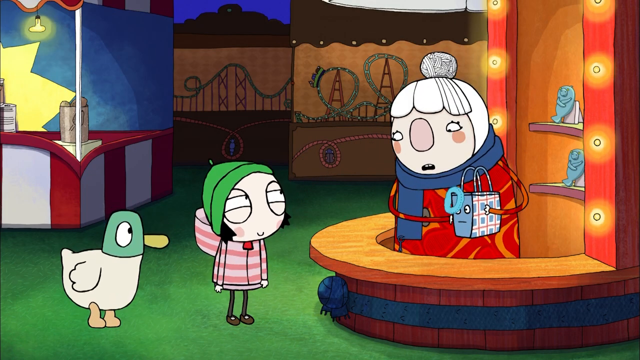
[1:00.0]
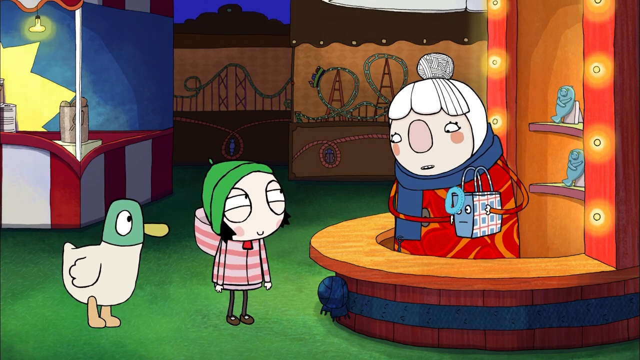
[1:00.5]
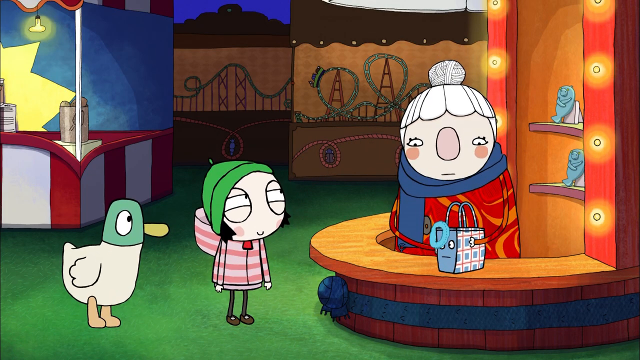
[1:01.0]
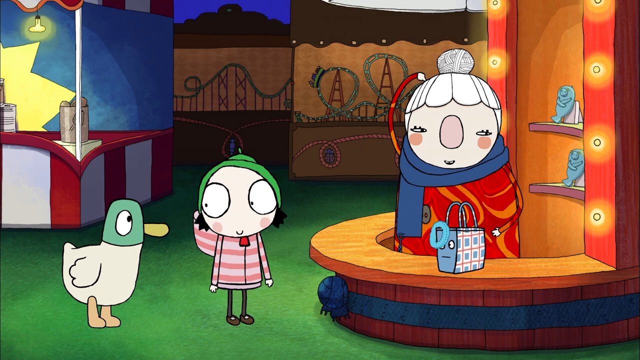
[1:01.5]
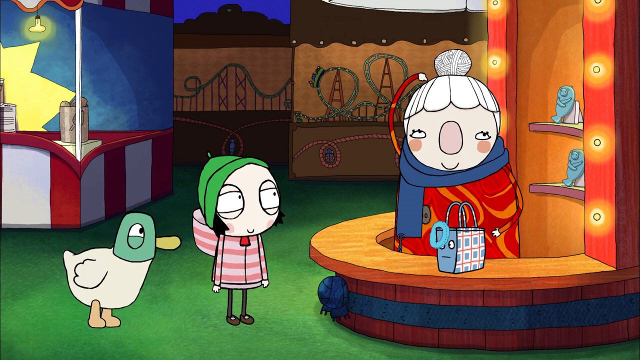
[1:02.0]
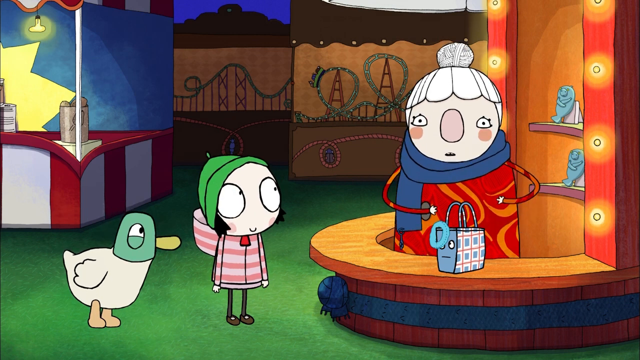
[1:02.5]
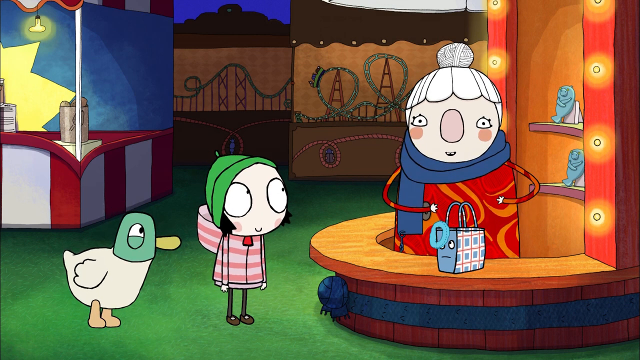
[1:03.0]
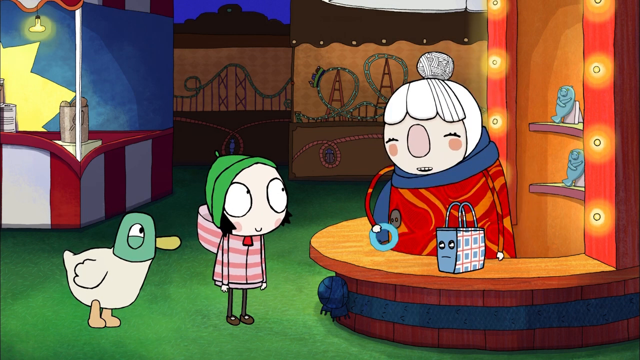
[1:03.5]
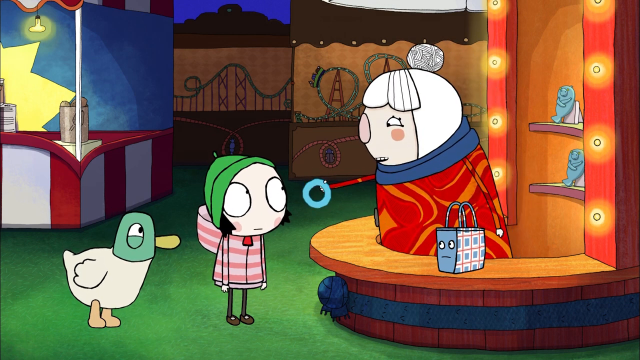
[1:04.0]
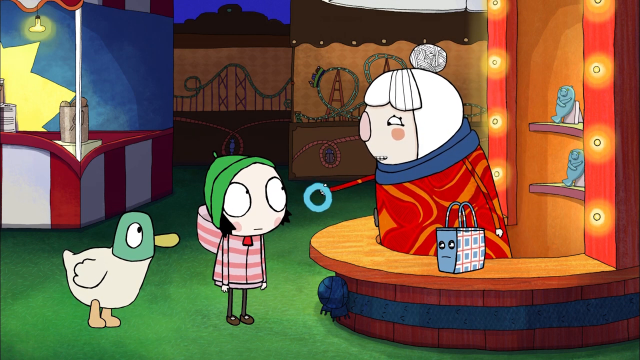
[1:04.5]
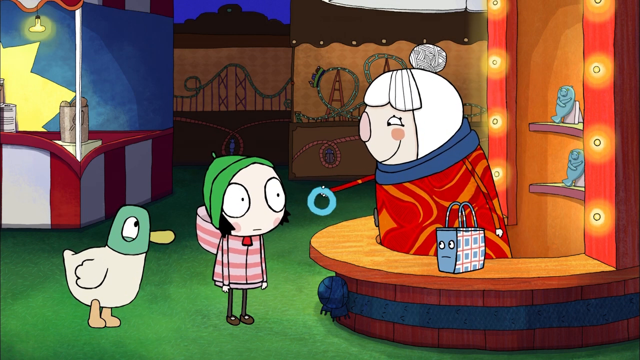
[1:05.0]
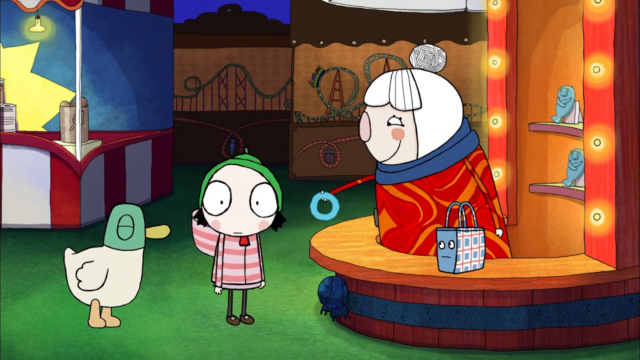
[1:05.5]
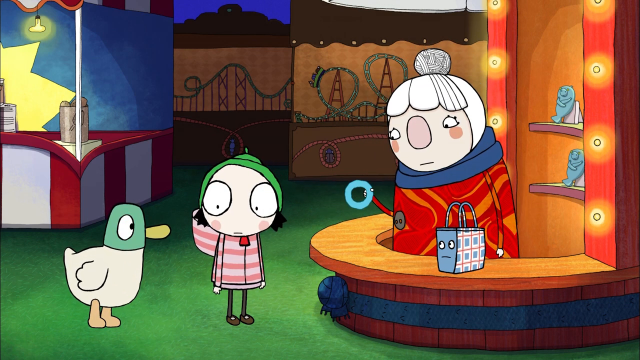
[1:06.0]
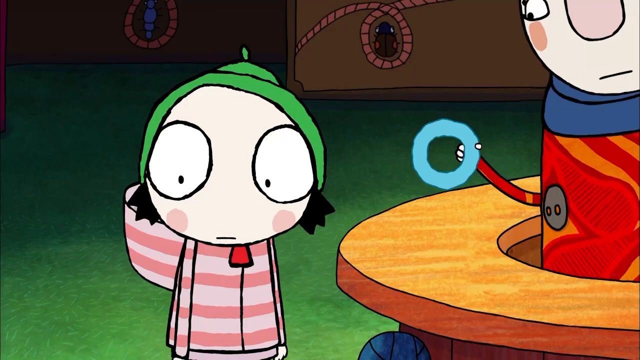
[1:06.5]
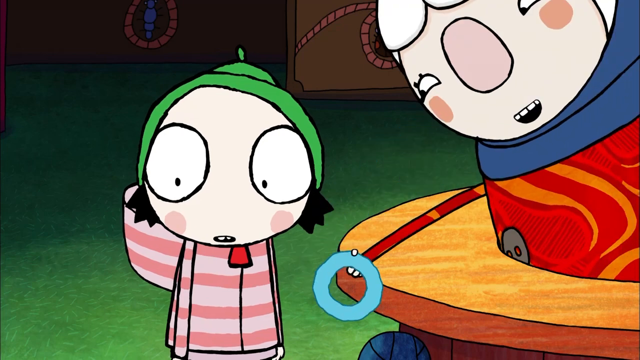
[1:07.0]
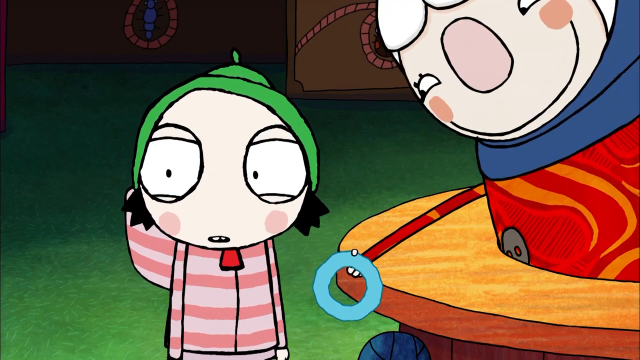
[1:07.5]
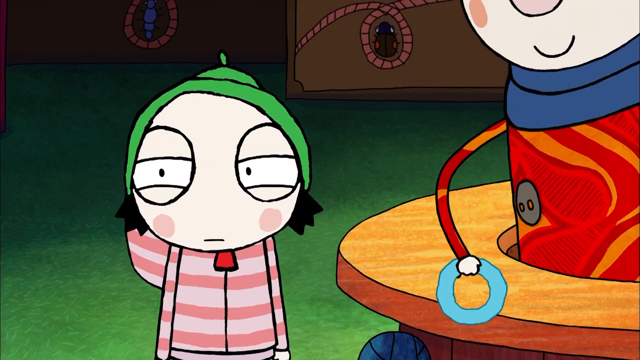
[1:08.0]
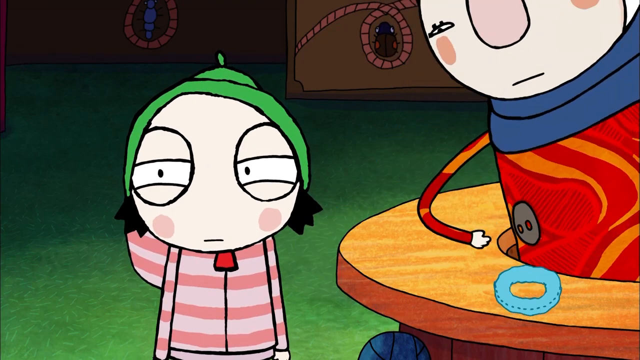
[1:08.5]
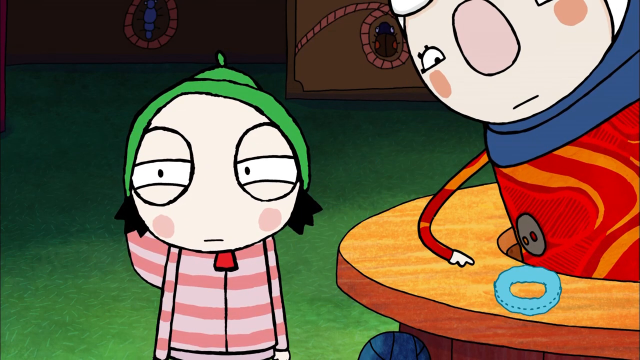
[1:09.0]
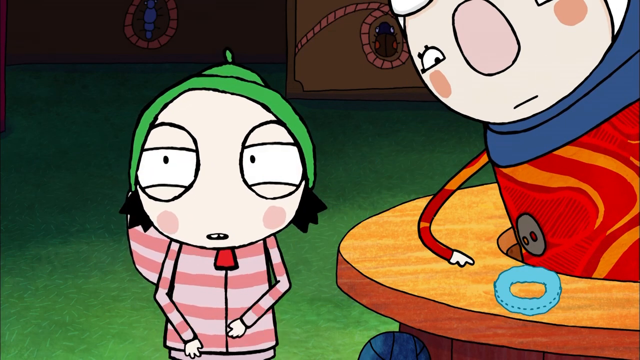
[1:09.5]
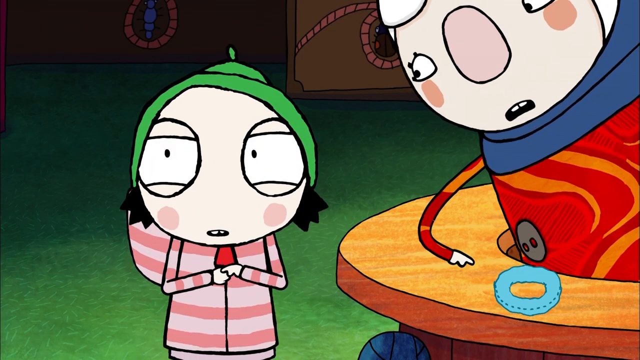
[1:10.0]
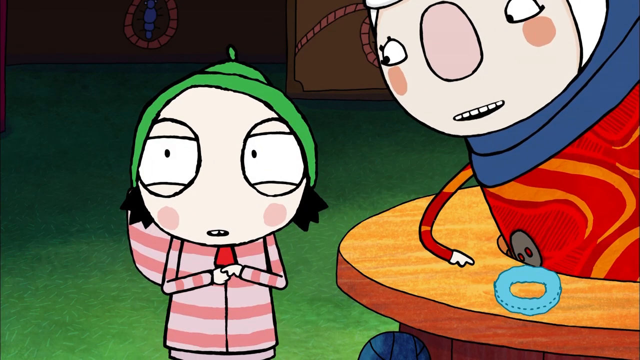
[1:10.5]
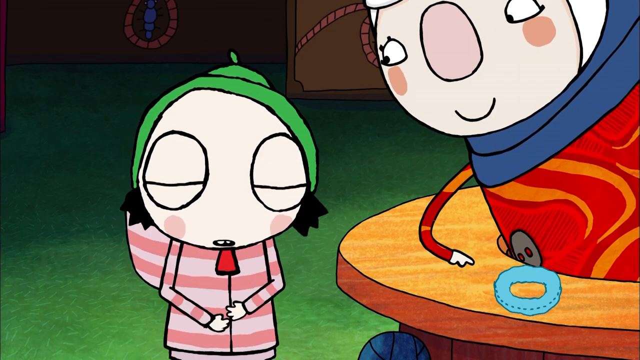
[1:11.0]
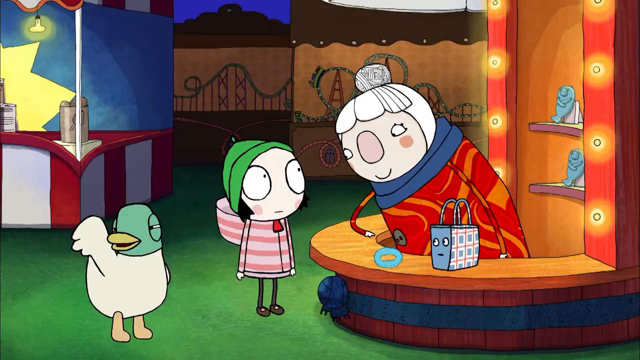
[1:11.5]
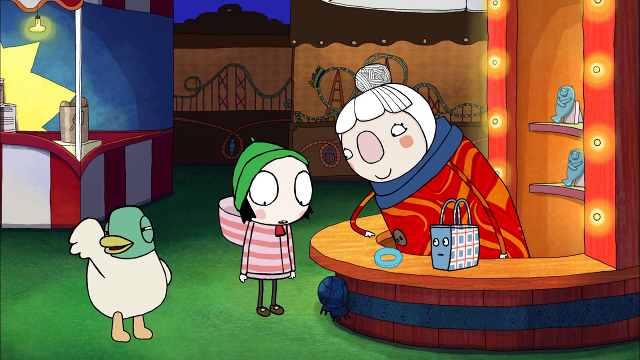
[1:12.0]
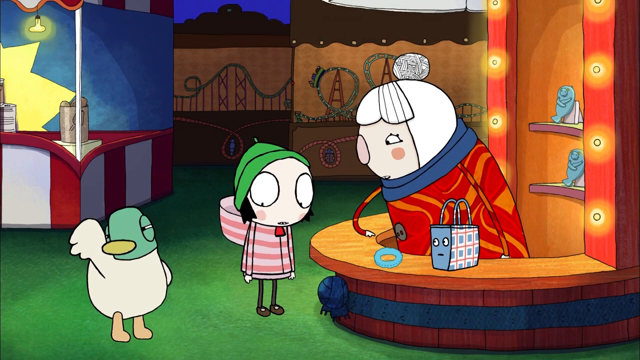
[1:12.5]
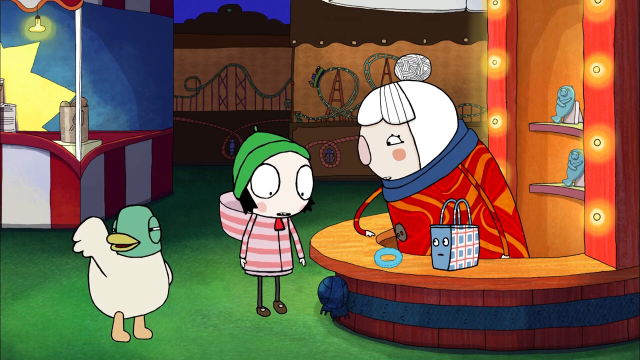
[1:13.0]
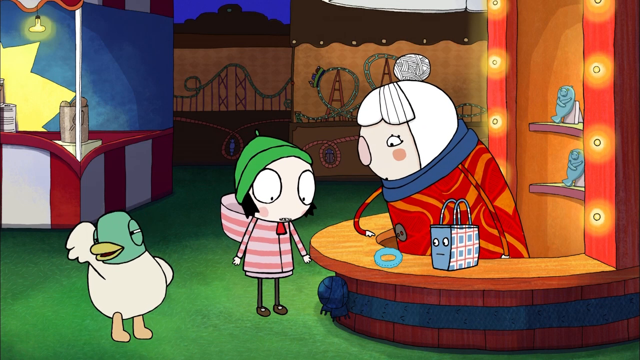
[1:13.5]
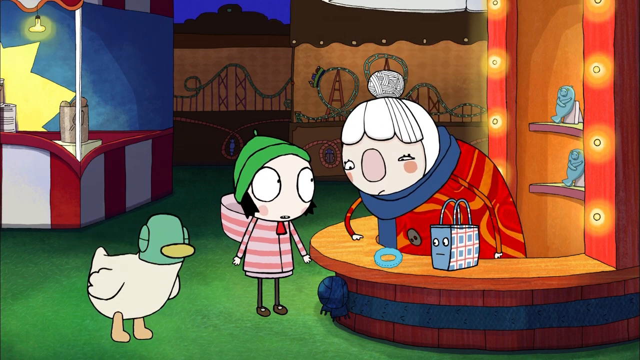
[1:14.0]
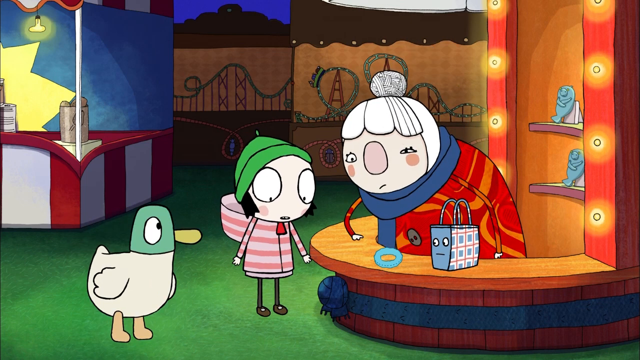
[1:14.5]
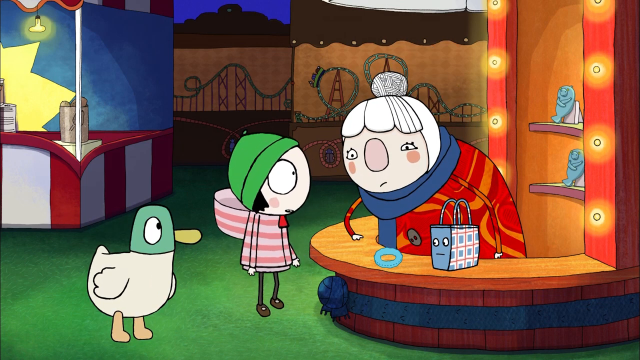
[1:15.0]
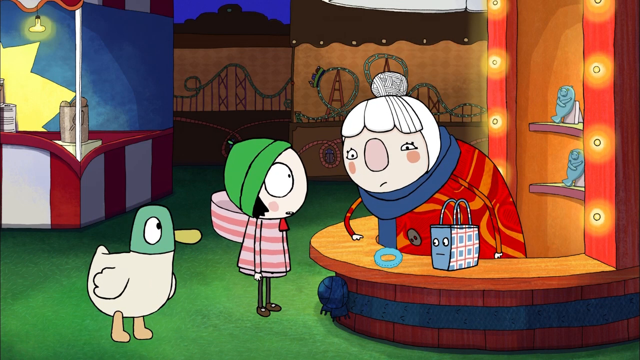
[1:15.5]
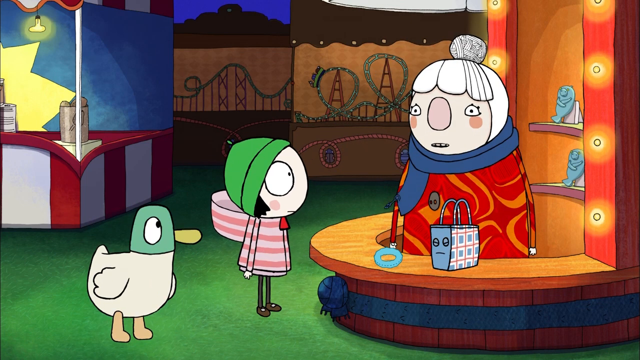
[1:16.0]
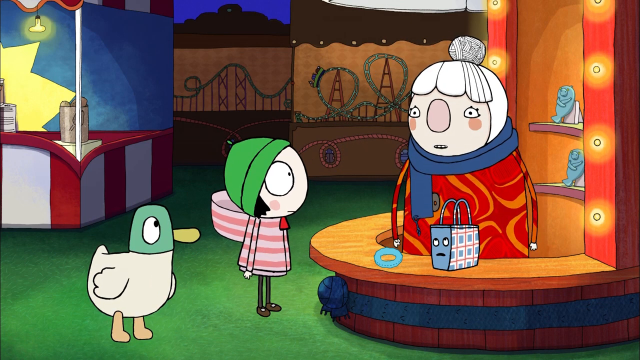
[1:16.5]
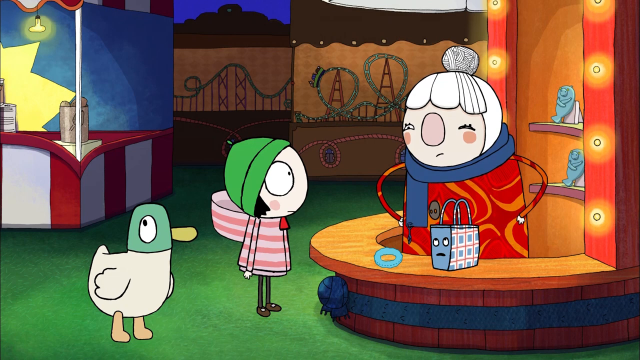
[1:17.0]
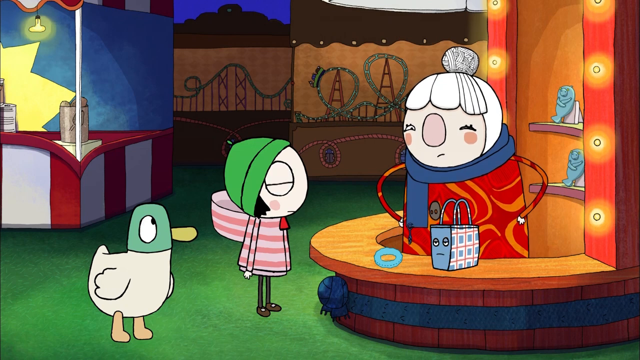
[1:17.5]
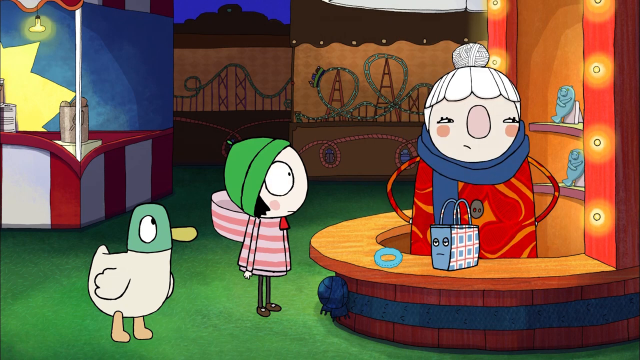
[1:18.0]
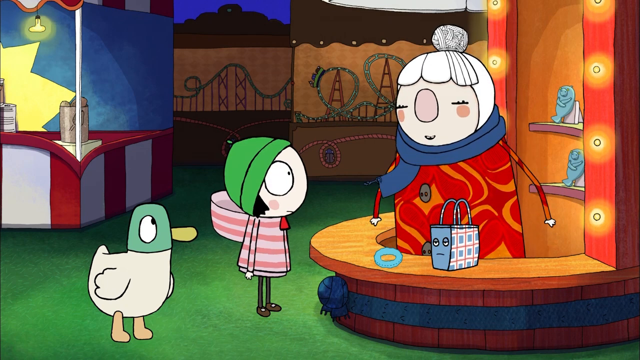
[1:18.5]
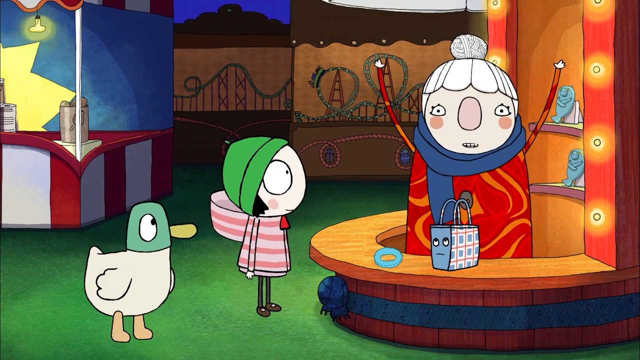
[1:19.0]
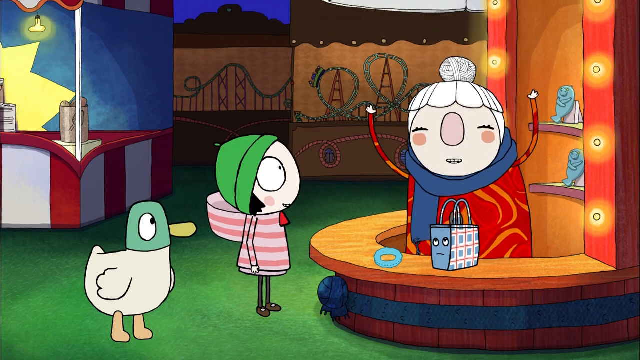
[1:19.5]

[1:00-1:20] The opening image is a dog with a girl wearing a green beanie, in 2D cartoon animation. They look like they are at a circus, buying something from the seller. The dog seems to agree with something the seller is saying as the seller displays a small accessory to both the girl and the dog, trying to convince them to buy something. The girl listens attentively to the seller and seems to take in what the dog wants.